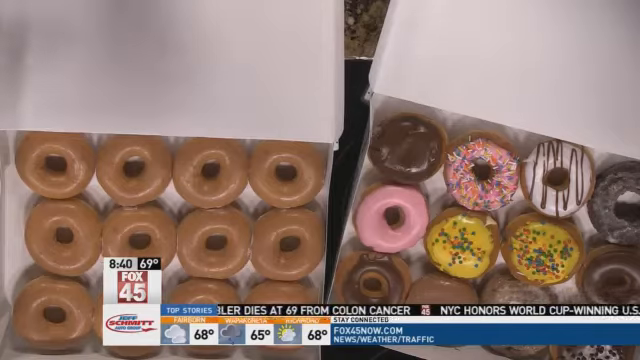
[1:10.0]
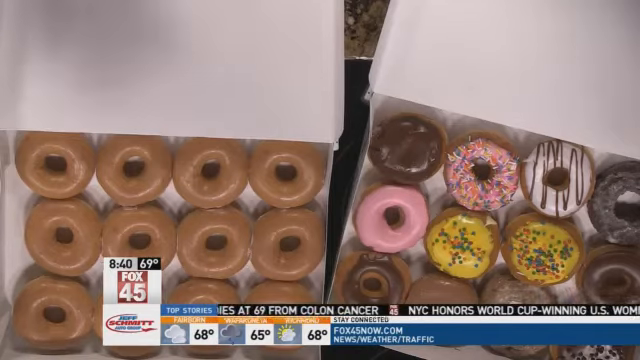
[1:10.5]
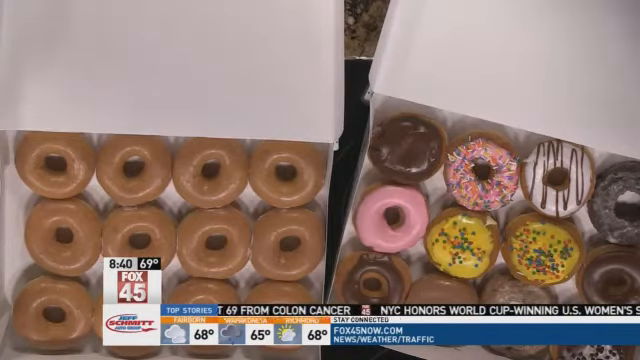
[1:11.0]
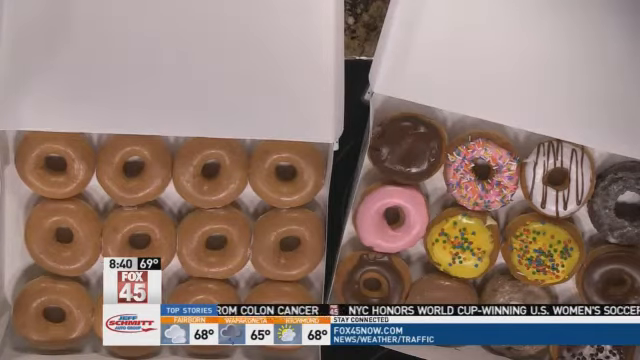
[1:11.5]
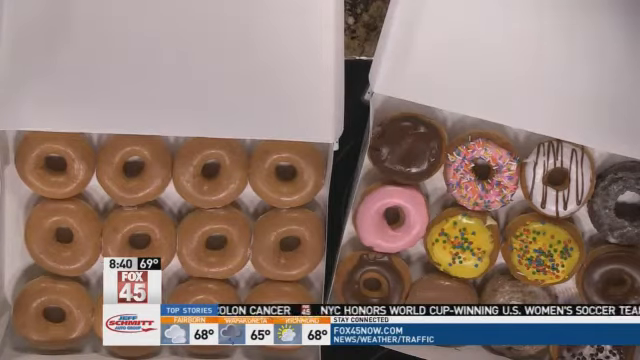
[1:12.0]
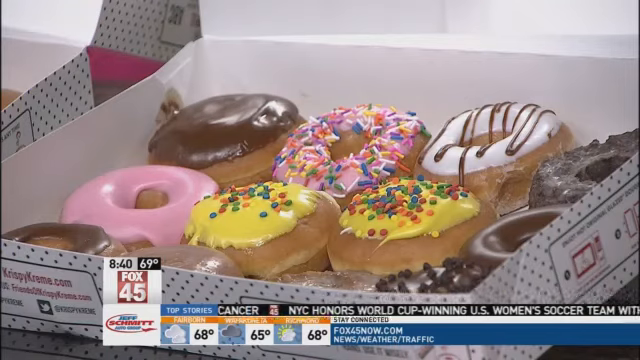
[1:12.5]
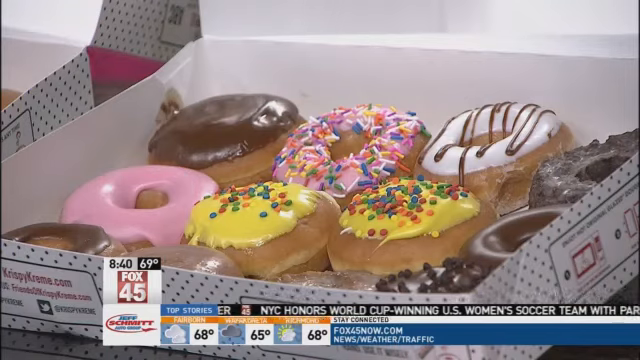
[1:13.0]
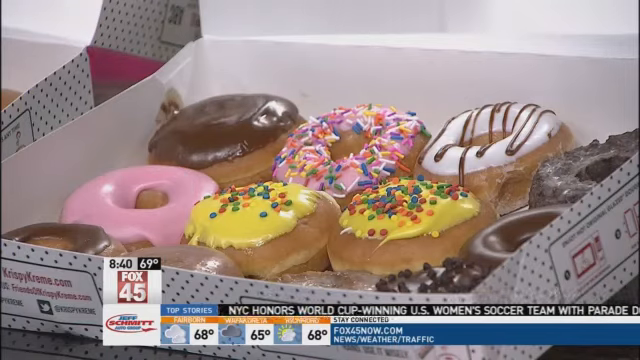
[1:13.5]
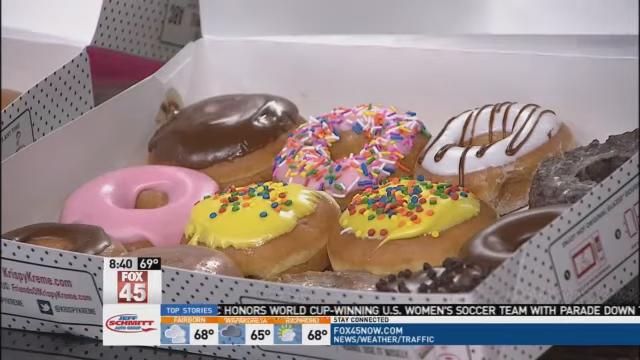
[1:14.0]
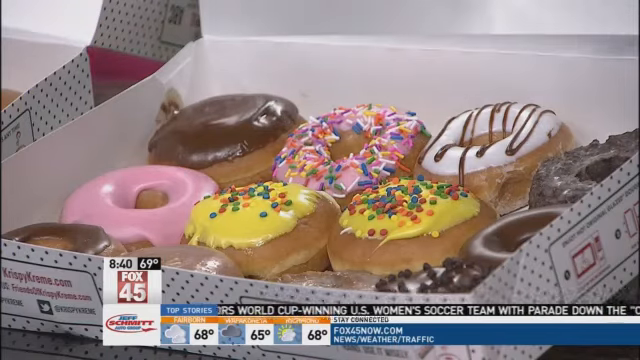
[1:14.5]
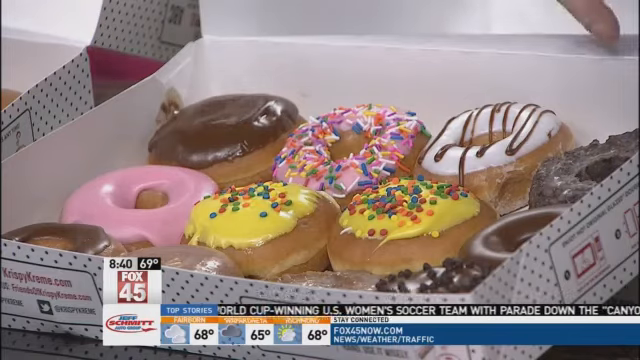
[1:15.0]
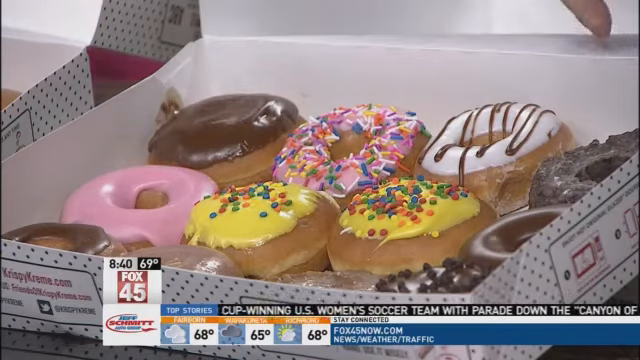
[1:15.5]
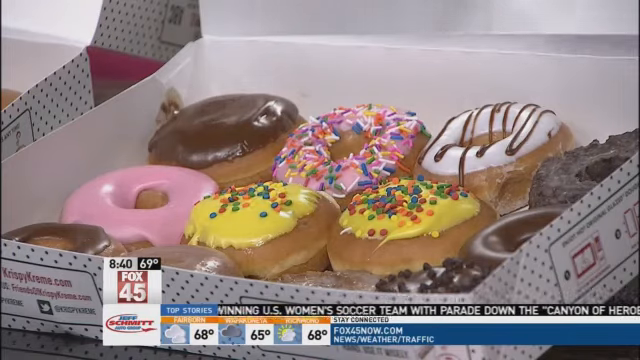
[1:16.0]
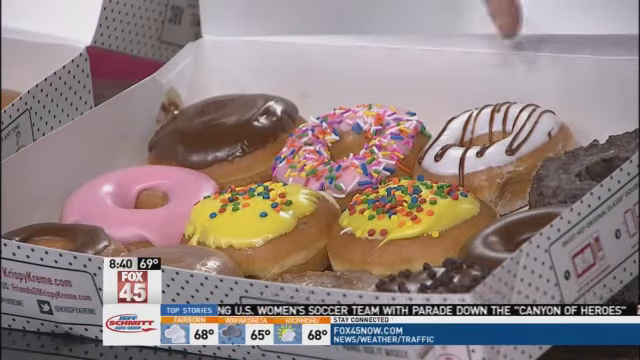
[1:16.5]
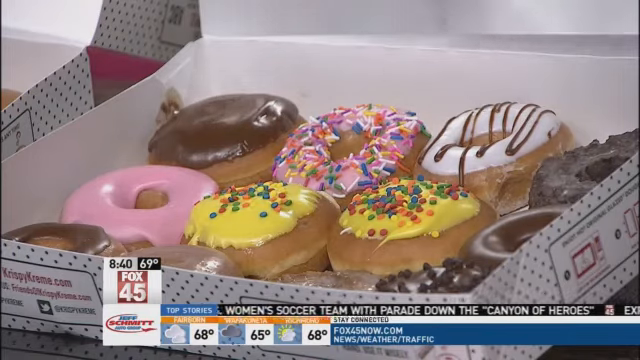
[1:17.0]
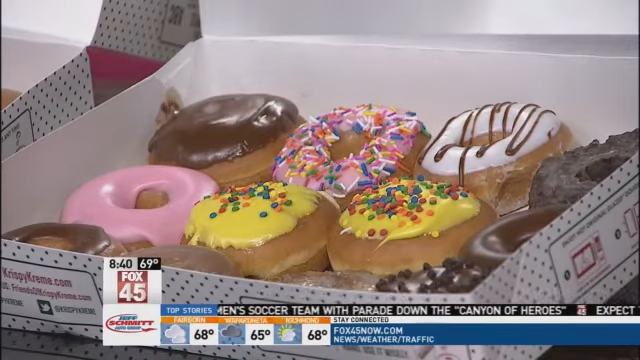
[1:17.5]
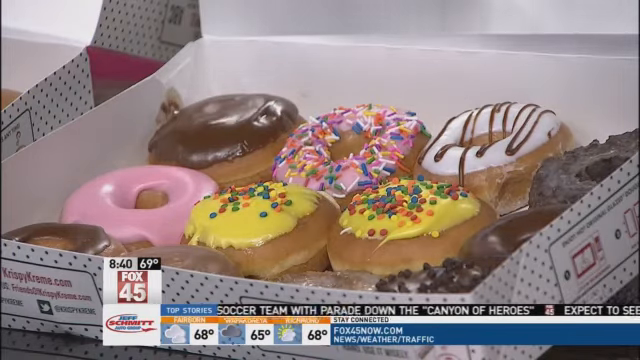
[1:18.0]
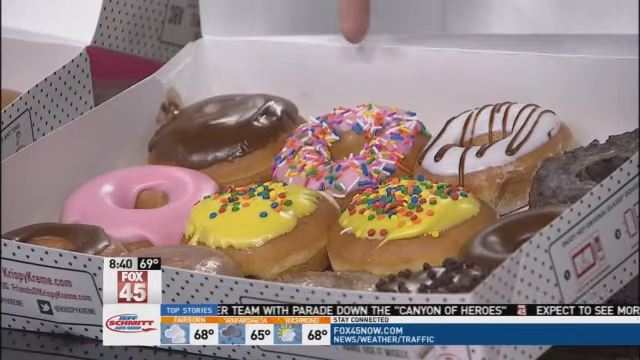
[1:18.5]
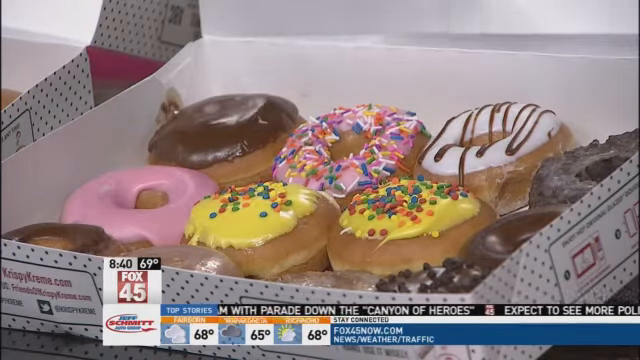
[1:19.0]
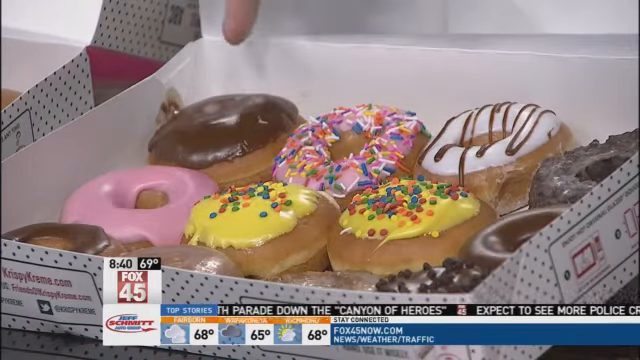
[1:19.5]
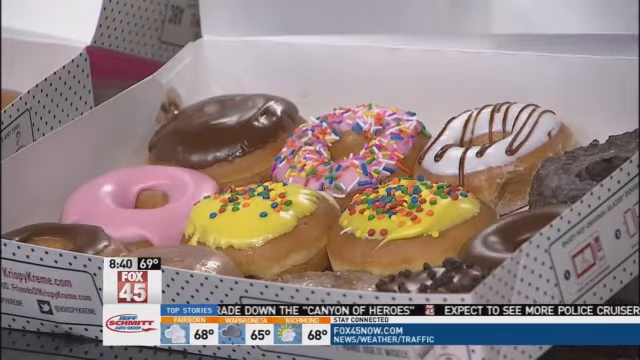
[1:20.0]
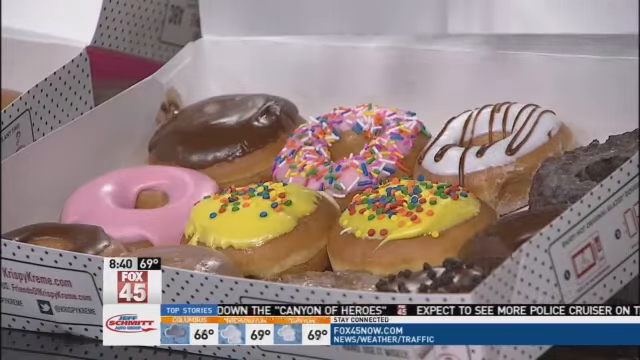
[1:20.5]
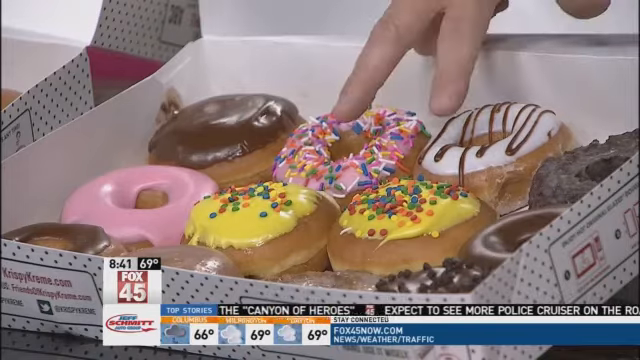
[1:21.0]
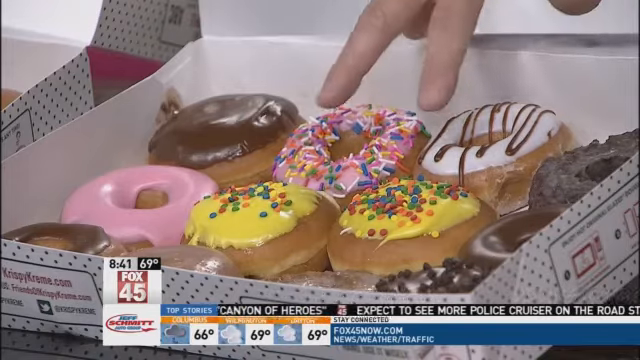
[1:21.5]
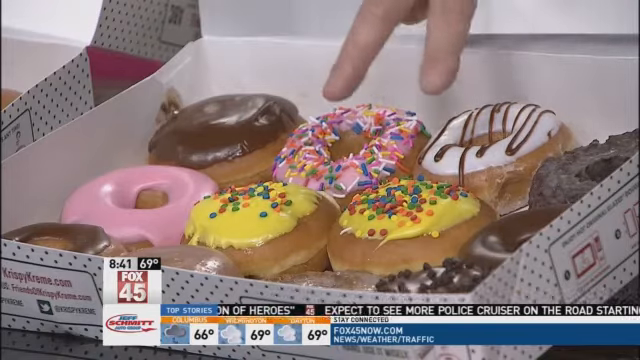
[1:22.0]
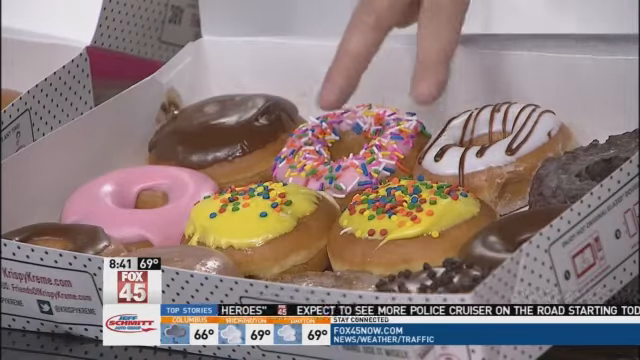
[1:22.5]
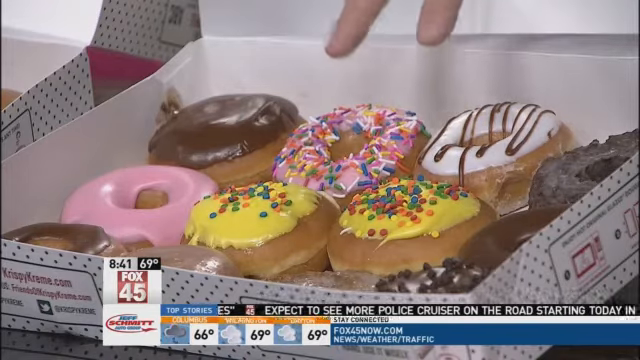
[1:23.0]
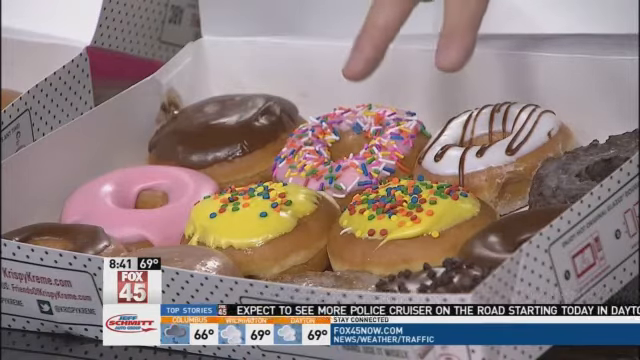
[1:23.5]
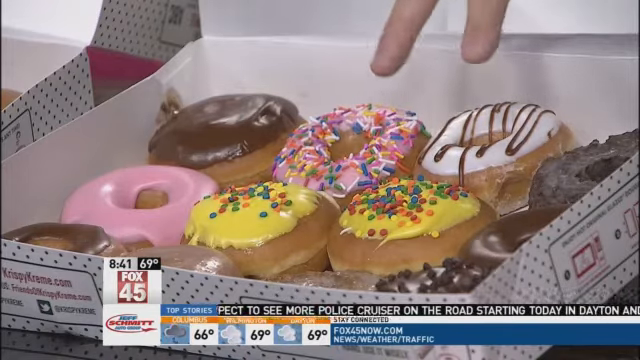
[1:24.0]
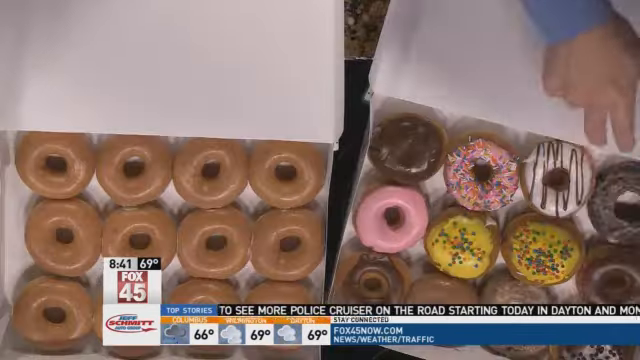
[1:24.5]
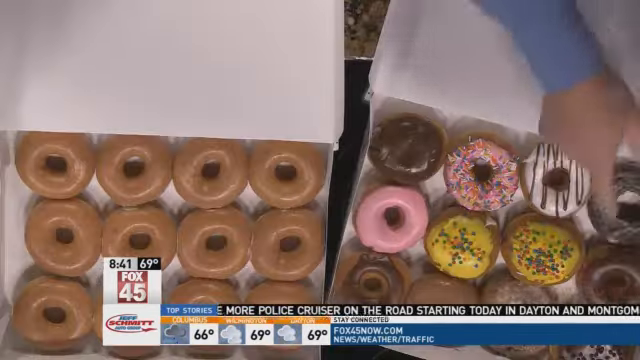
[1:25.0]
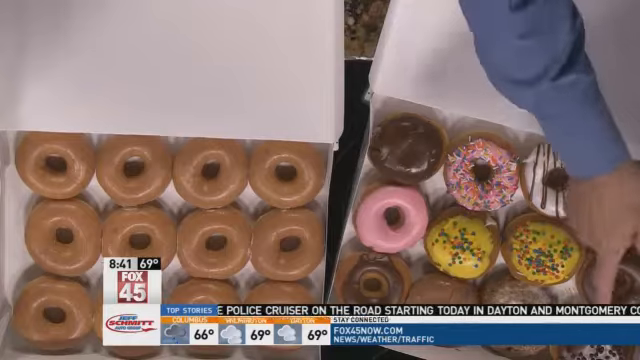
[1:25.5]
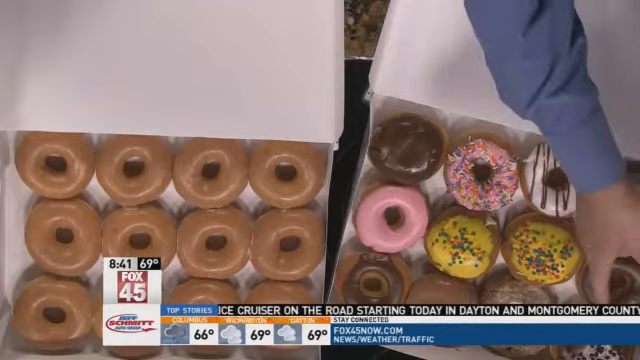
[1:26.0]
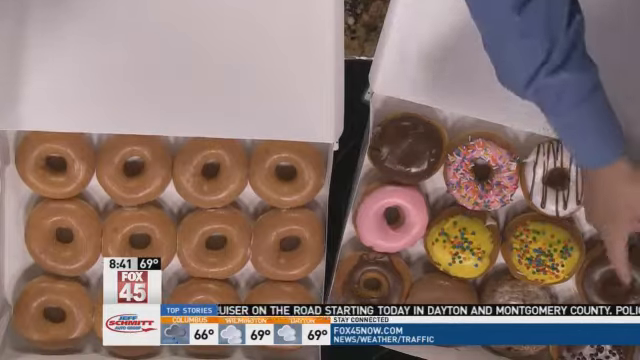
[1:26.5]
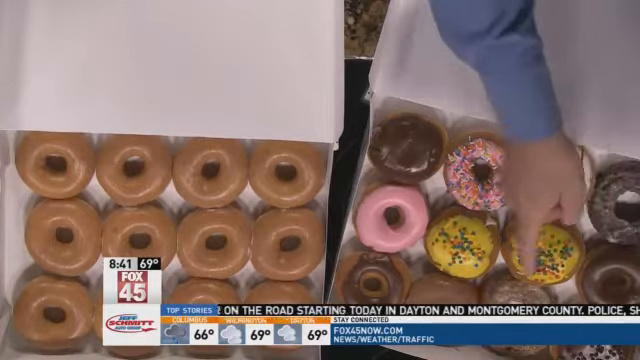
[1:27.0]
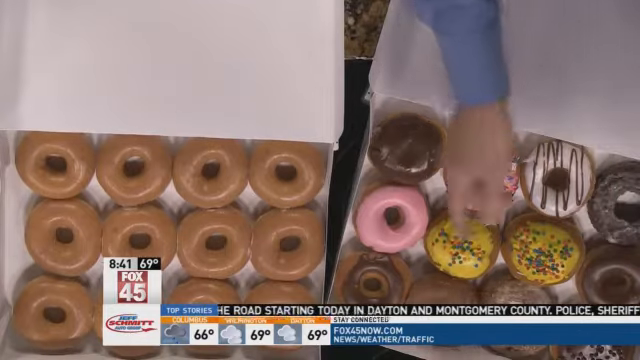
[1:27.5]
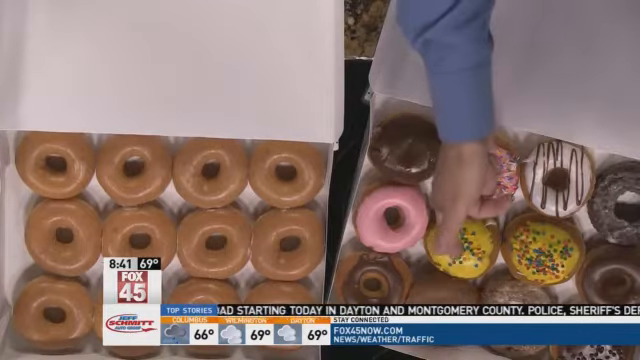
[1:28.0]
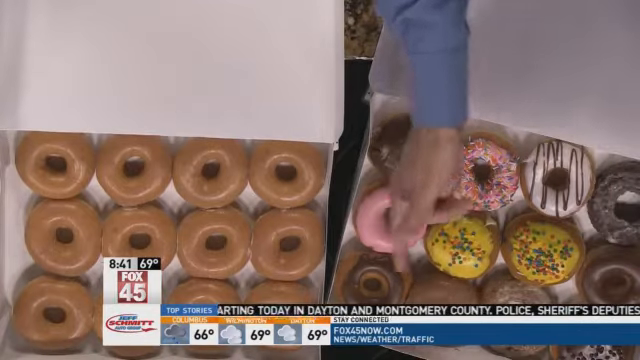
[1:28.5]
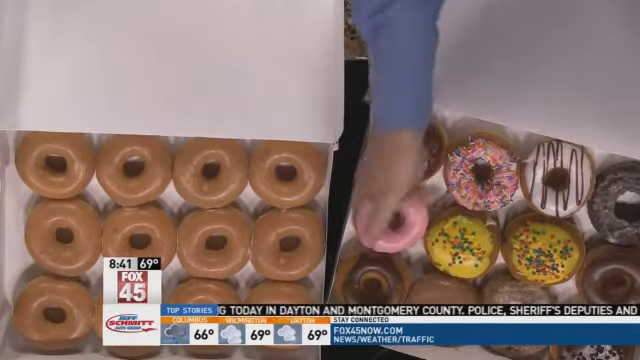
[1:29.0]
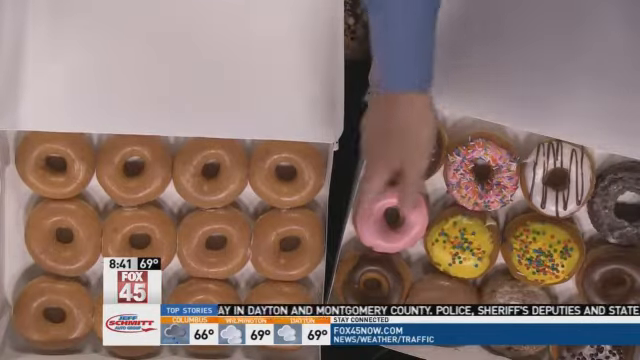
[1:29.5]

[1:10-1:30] The camera still points down at the boxes of donuts, showing two boxes. The ones on the left all look like plain glazed, while the ones on the right have much more variety, including some cream-filled chocolate ones and a cream-filled one with a yellow frosting top. The donuts are then shown from a more level view, revealing the different textures of the glaze, the sprinkles and the decorations. Occasionally the man's thumb and fingertips appear as he points, perhaps to different flavors or kinds. For a prolonged moment he holds out his middle finger and pointer finger, almost like a peace sign, apparently pointing to two different doughnuts. The camera then looks down again, showing more of his hand as he uses his pointer finger to kind of point out different varieties.